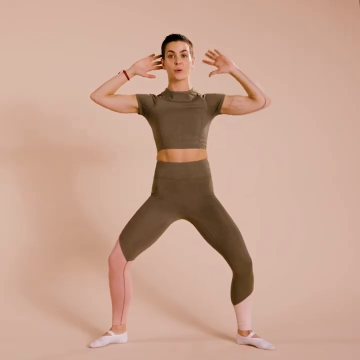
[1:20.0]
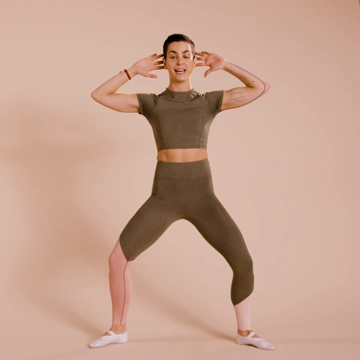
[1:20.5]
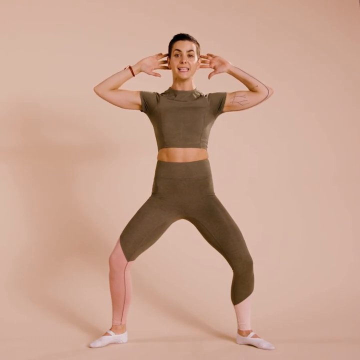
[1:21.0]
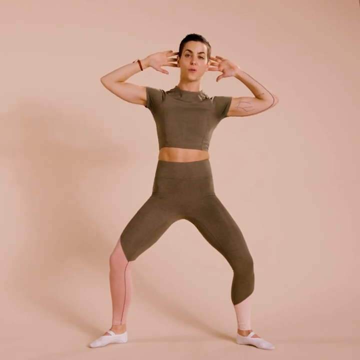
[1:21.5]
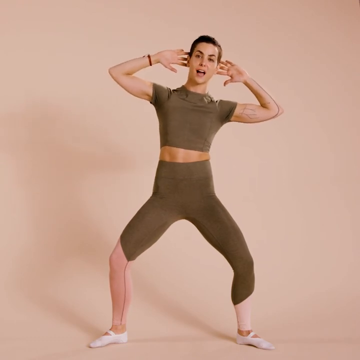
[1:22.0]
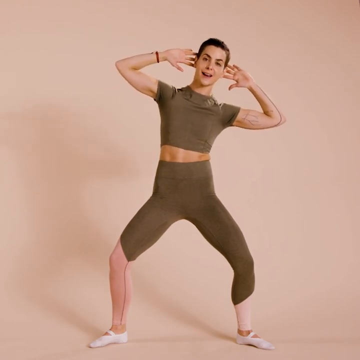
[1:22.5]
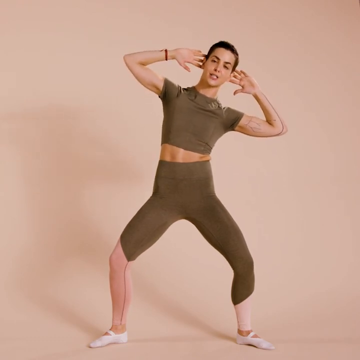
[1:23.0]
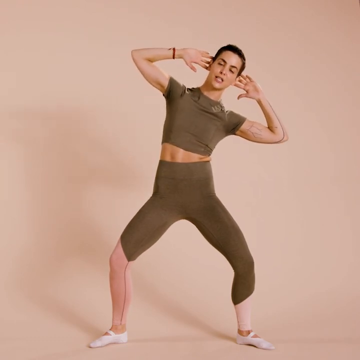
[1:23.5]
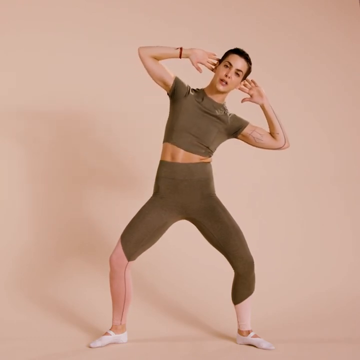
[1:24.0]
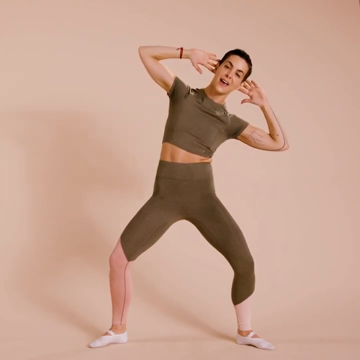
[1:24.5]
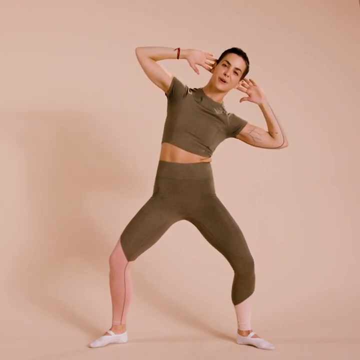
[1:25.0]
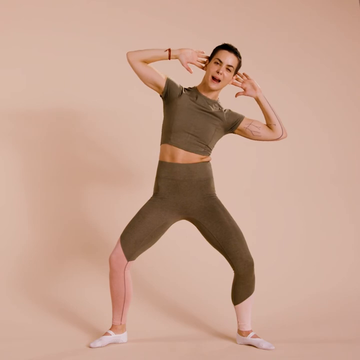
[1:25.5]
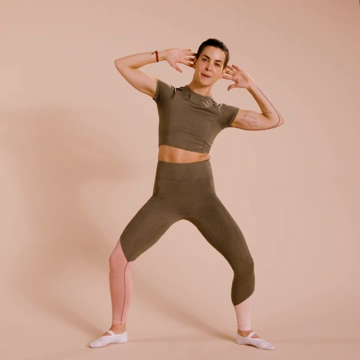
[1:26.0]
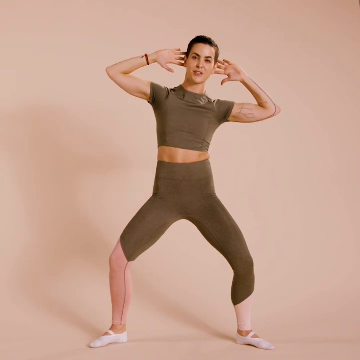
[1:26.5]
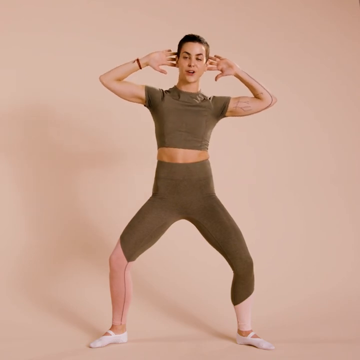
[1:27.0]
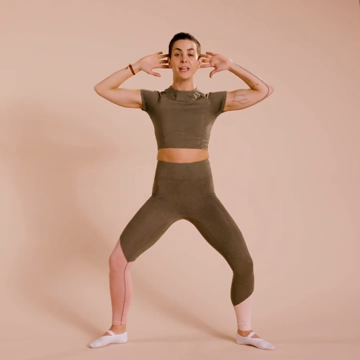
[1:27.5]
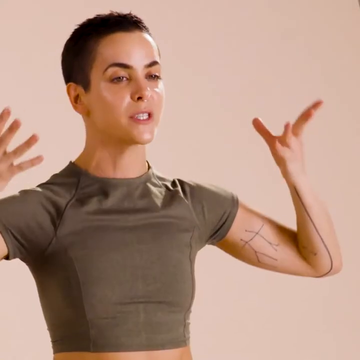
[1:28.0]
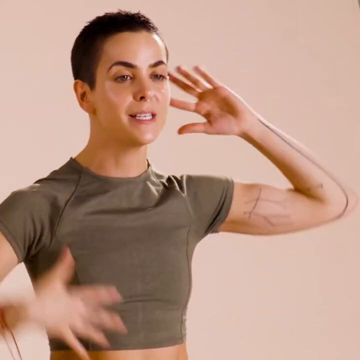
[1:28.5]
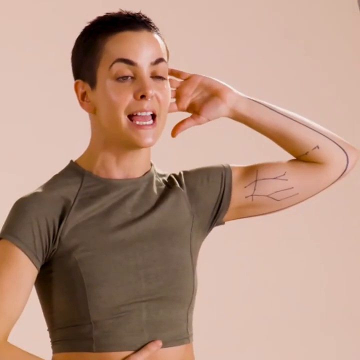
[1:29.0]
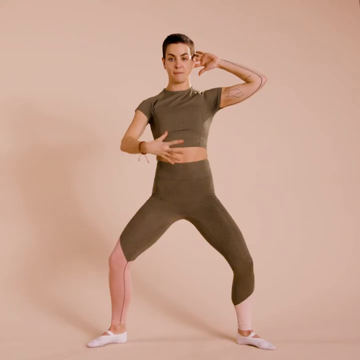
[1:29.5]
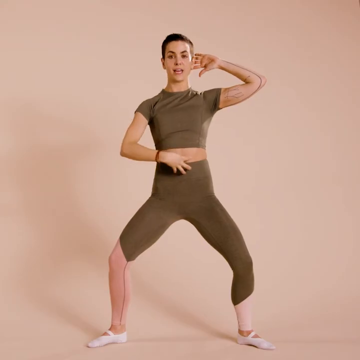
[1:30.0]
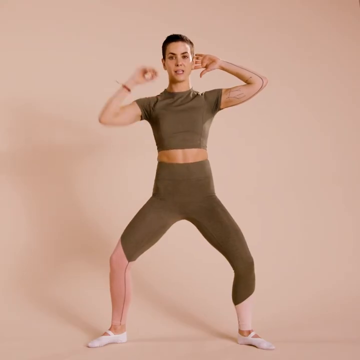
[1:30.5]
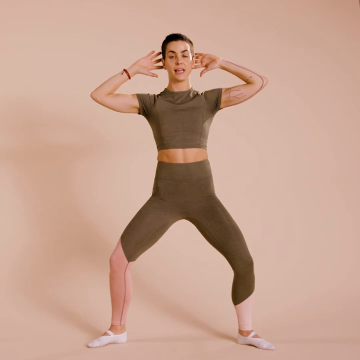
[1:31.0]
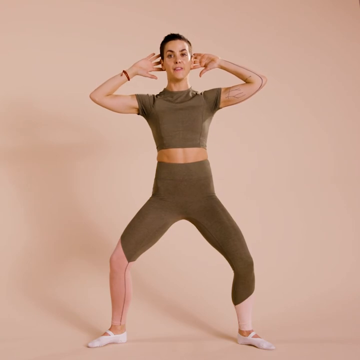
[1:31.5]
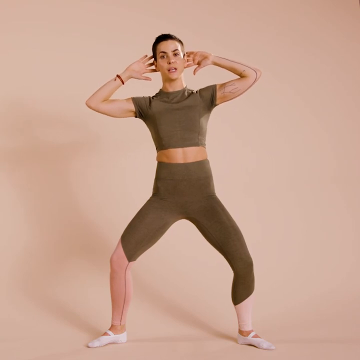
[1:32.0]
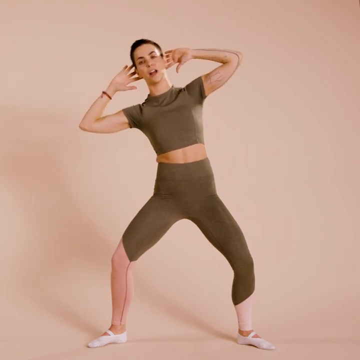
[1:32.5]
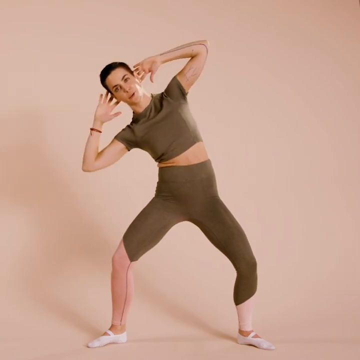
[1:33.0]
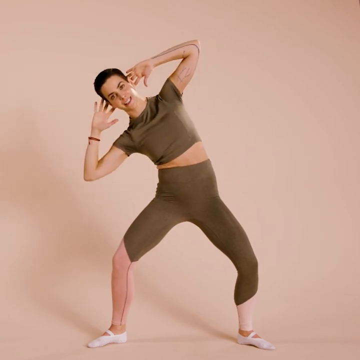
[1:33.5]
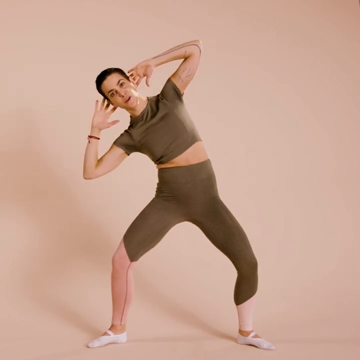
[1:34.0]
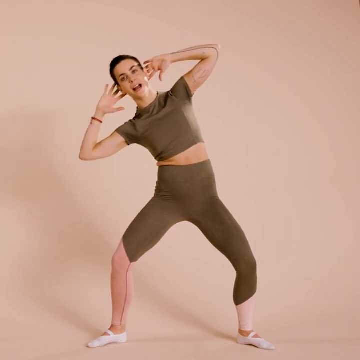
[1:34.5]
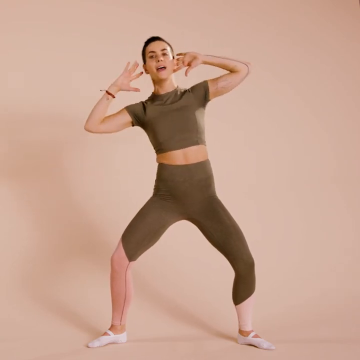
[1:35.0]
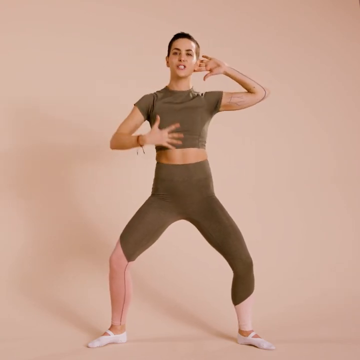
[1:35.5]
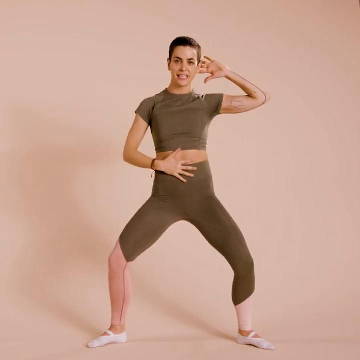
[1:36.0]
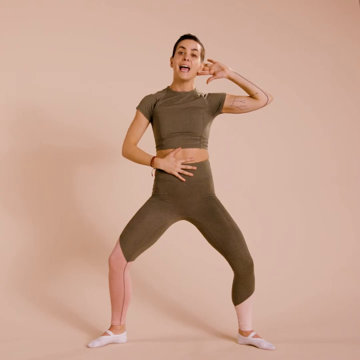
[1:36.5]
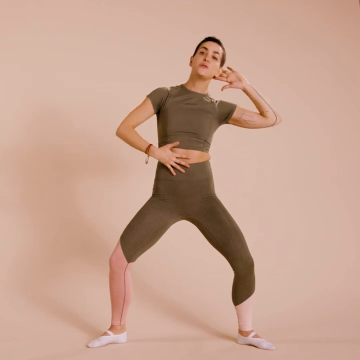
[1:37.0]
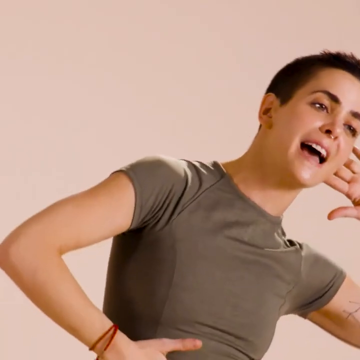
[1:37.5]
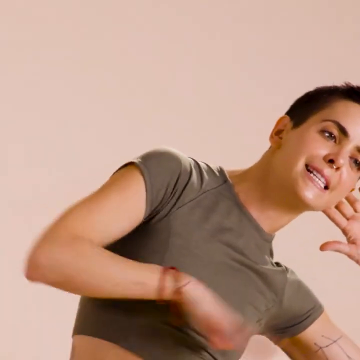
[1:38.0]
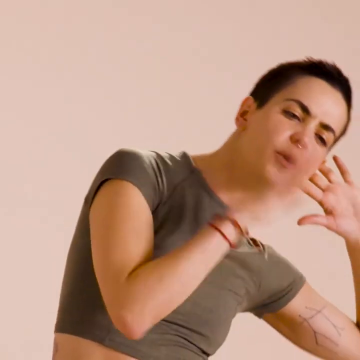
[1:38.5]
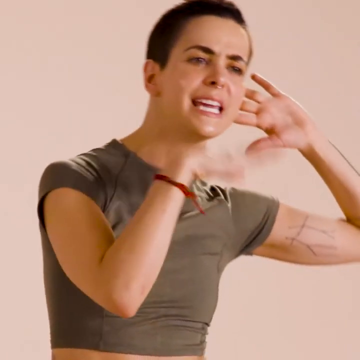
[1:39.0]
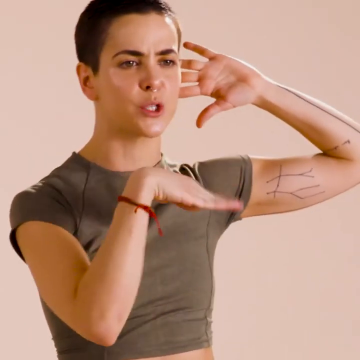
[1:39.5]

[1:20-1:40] Centered, still keeping the wide stance with her arms up and hands behind her head, she slowly tips toward the left side with her right shoulder, making sure she is stacked above her left knee, speaking as she does so. Once stacked over, she returns to the center to align her body. Then, in a quicker motion, she safely and carefully tips over to her right side with her right shoulder, keeping her core tight and braced the entire time so that her chest does not face the ground but continues to face forward. She then goes over to her left while taking her right hand off her head and placing it on her core to emphasize her point, so only her left hand goes toward the left.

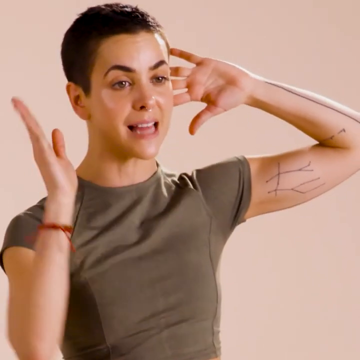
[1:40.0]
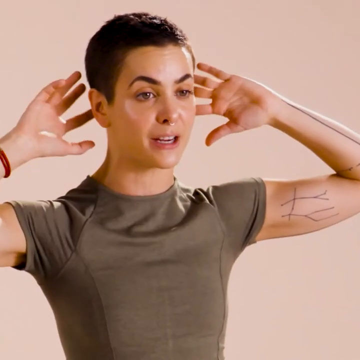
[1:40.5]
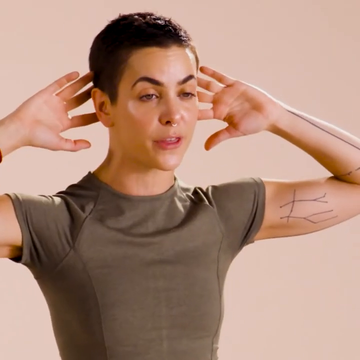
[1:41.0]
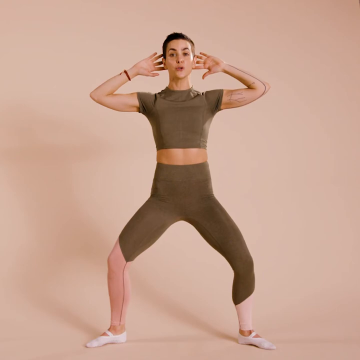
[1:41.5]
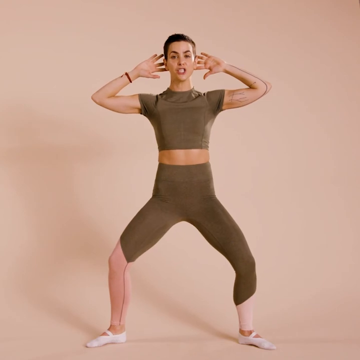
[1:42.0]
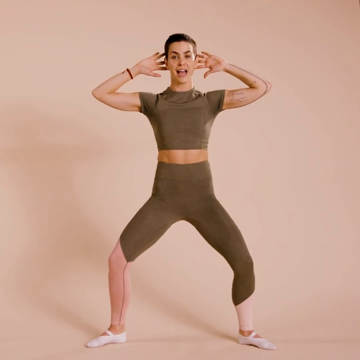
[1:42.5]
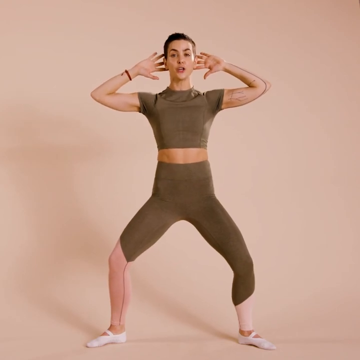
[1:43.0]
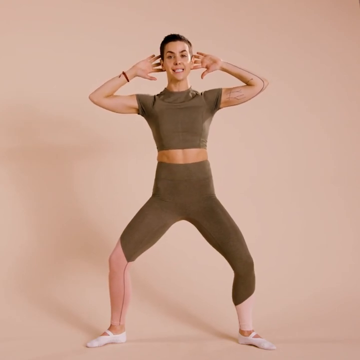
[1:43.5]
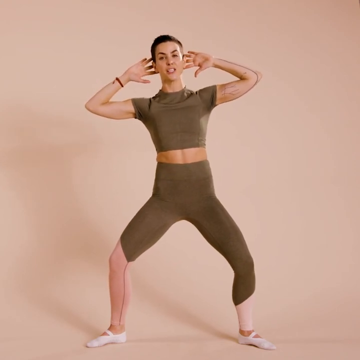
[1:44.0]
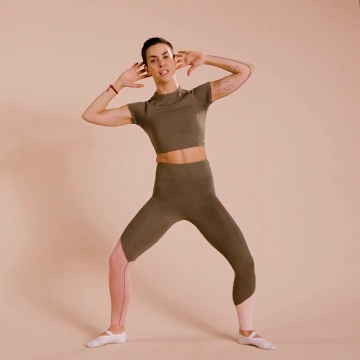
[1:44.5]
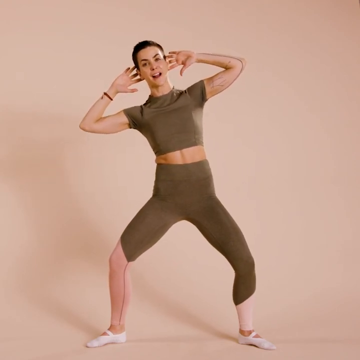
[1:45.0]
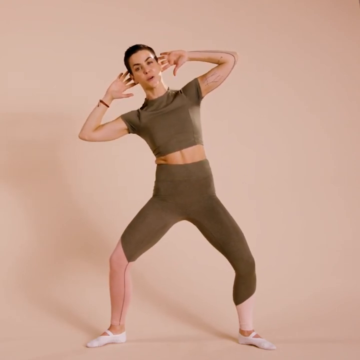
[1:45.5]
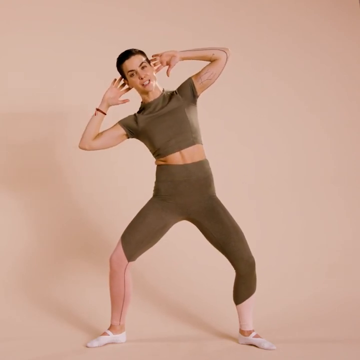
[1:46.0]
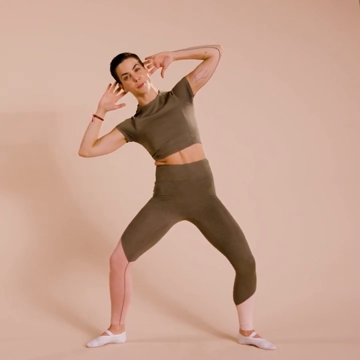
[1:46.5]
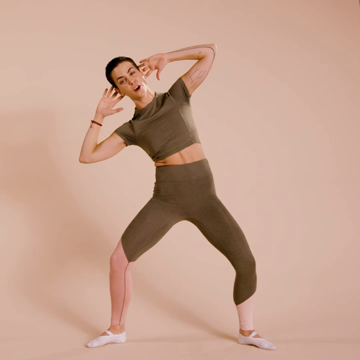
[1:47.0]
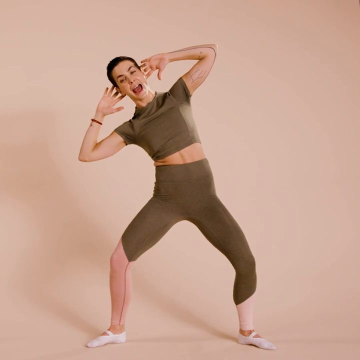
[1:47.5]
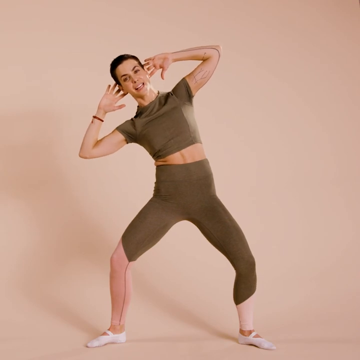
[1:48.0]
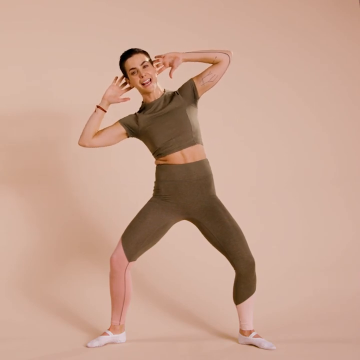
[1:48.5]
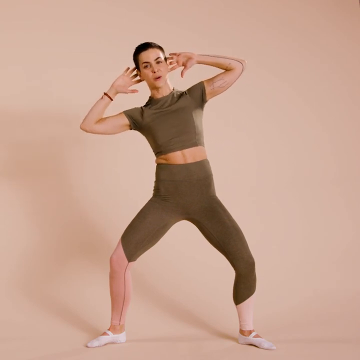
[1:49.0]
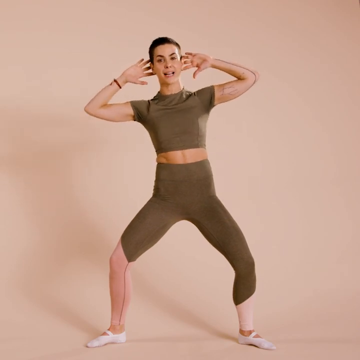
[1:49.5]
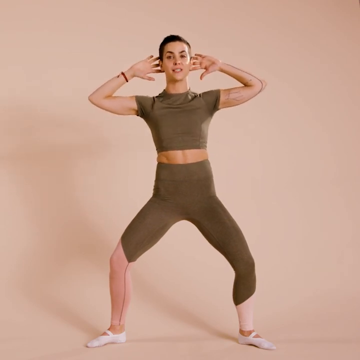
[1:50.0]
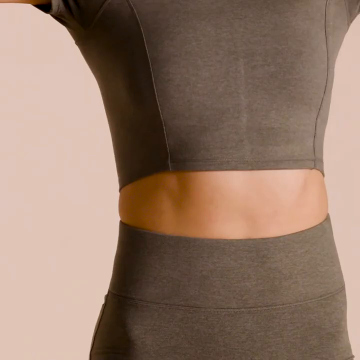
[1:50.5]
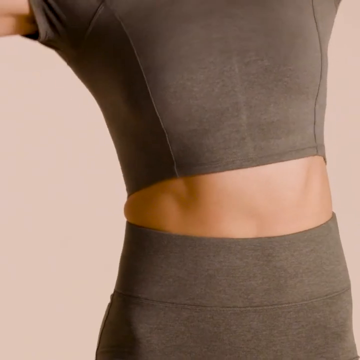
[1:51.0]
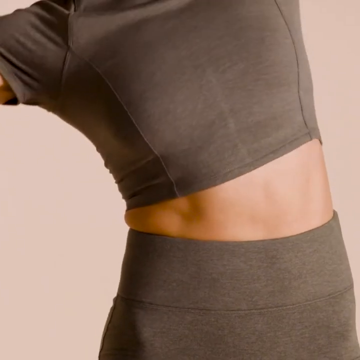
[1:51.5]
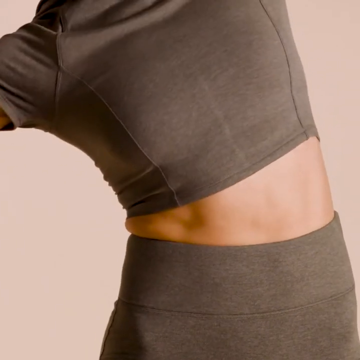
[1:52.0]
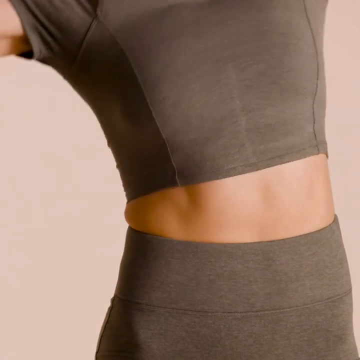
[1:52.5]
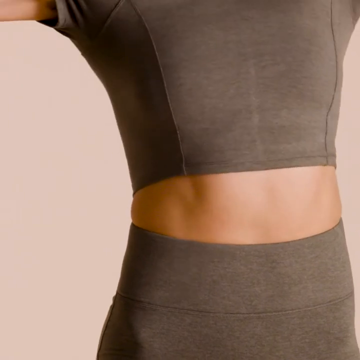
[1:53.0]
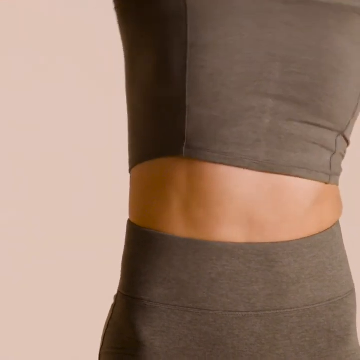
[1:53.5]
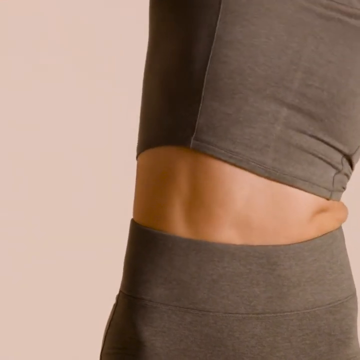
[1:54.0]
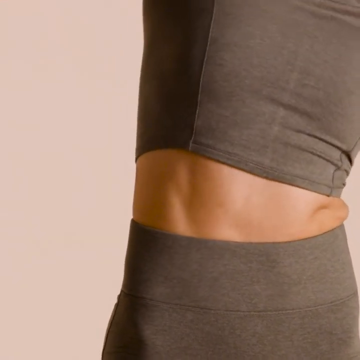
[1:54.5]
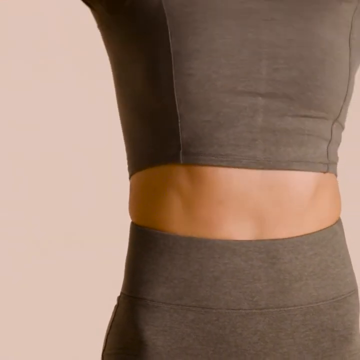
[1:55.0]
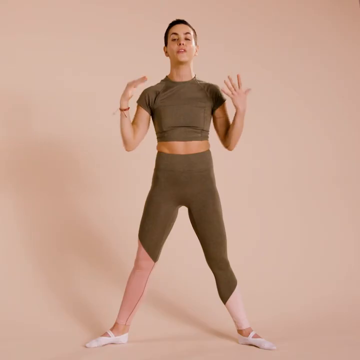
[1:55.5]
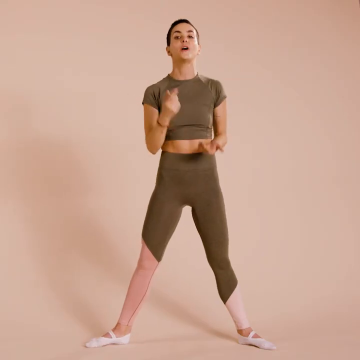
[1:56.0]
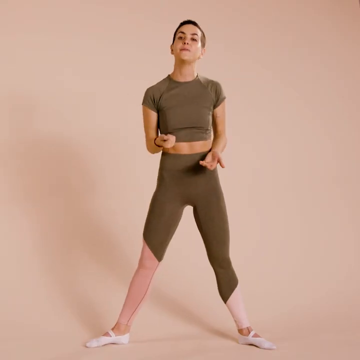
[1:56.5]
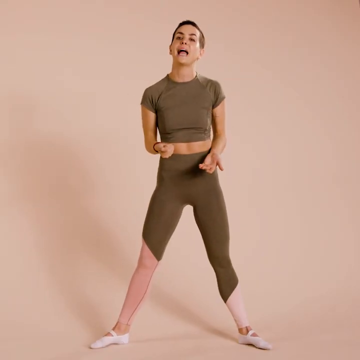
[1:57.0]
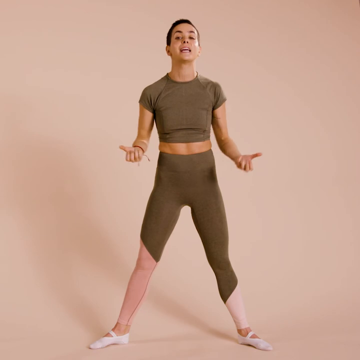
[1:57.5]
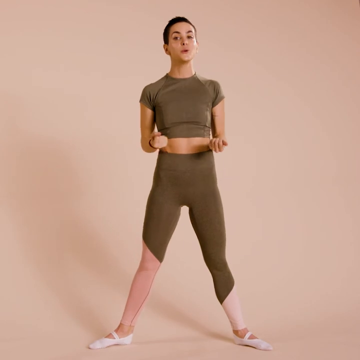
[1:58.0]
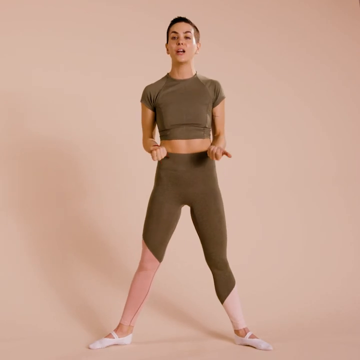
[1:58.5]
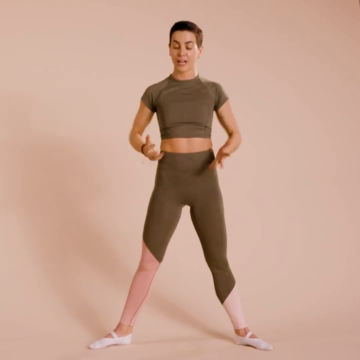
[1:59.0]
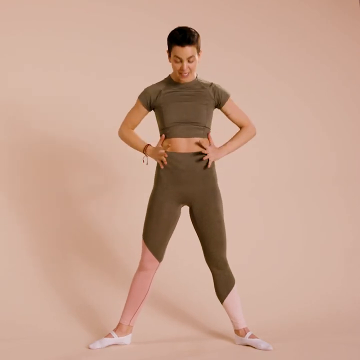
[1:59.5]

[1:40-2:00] She puts her right hand behind her head again and, aligned in the center, tips over to the right, keeping her body aligned with her core, then tips back to the center. The camera focuses on her abs and core to show more closely what she is doing as she tips to the left. The next shot shows her continuing to move side to side. In the following shot she stands in the wide stance with her arms relaxed, speaking and gesturing with her arms and hands. She again braces her hands on her core, pressing her palms against her ribcage and slowly pushing her fingers into her core to show keeping the core tight during these movements.